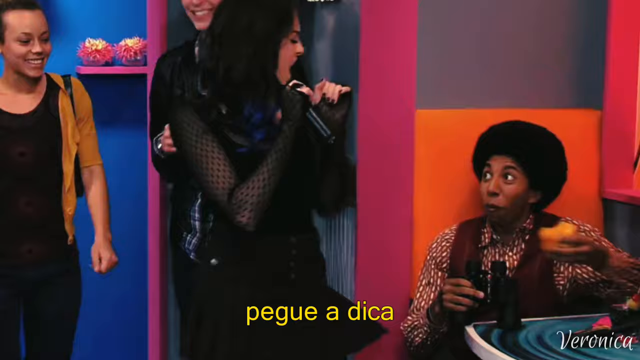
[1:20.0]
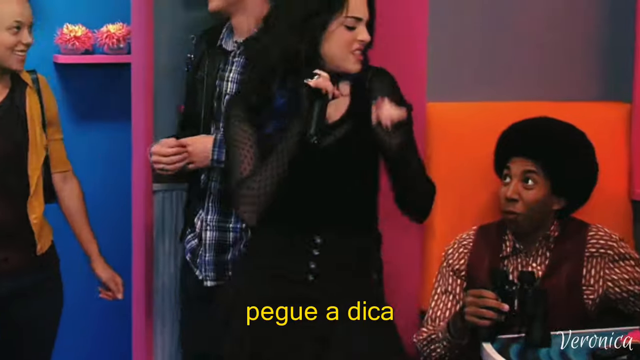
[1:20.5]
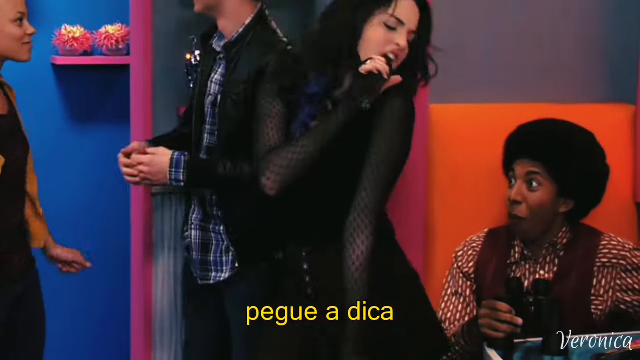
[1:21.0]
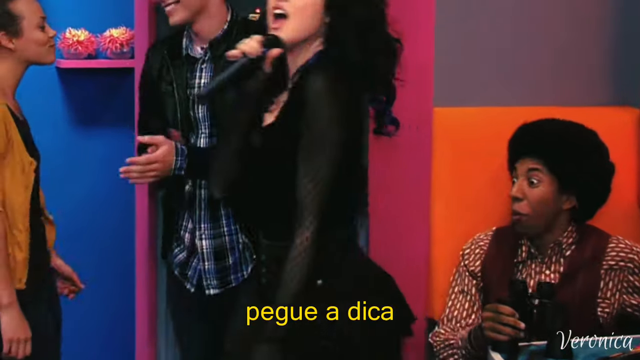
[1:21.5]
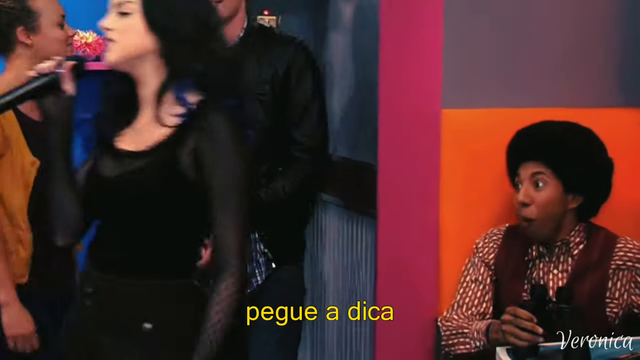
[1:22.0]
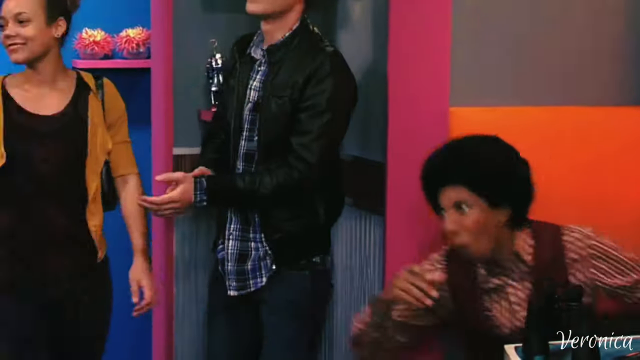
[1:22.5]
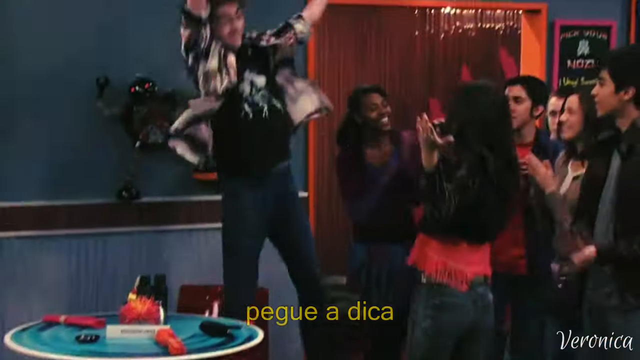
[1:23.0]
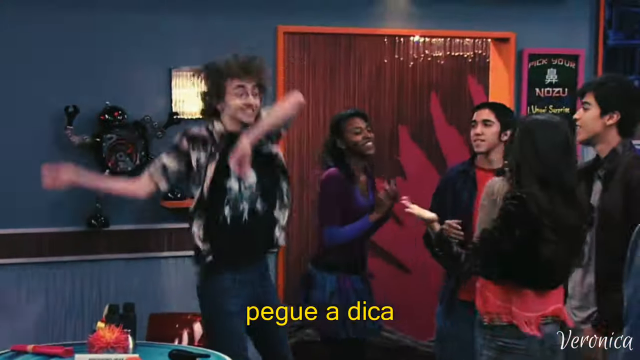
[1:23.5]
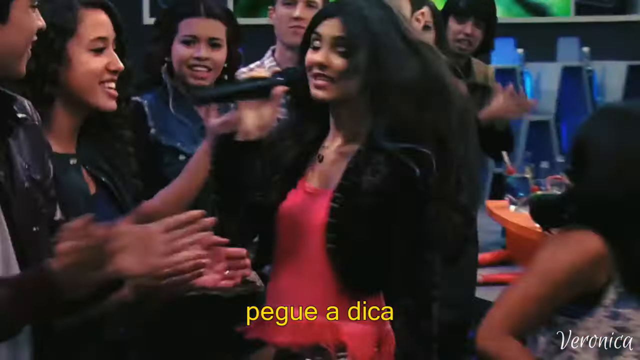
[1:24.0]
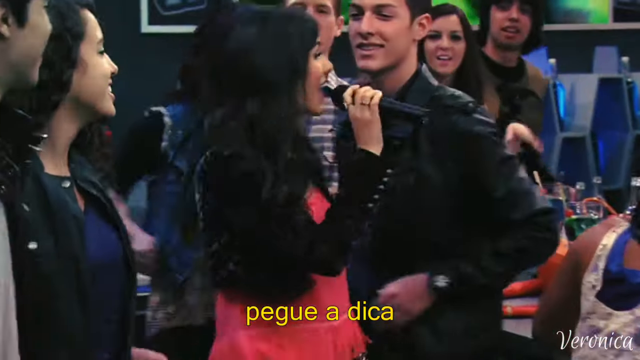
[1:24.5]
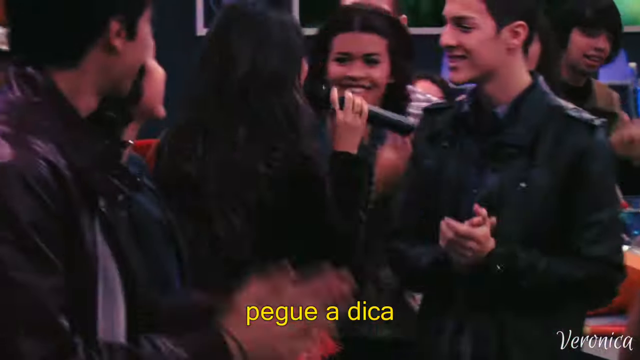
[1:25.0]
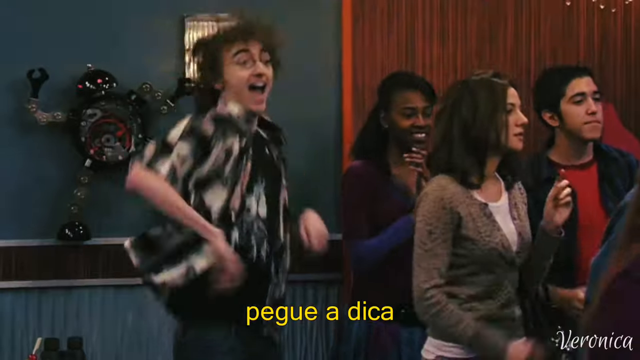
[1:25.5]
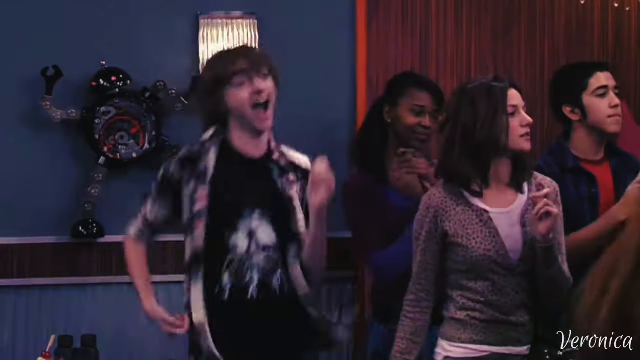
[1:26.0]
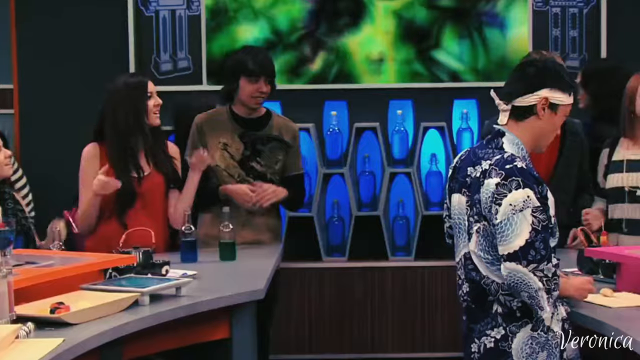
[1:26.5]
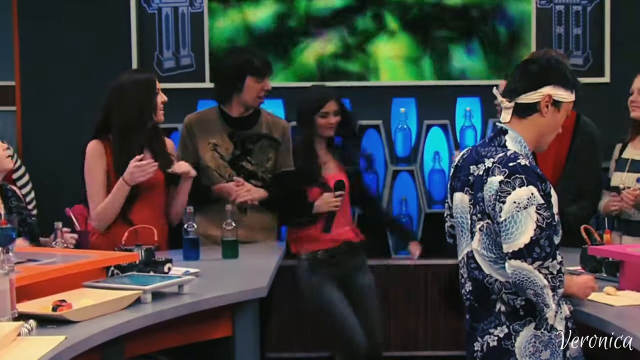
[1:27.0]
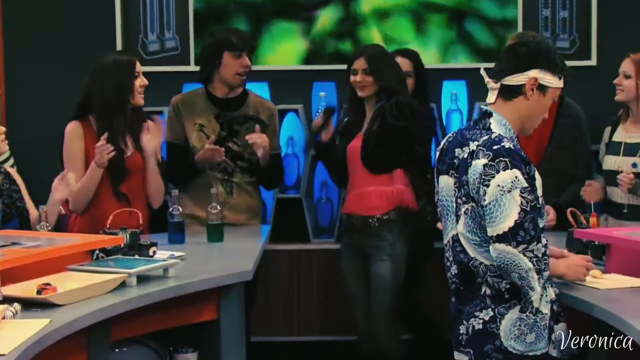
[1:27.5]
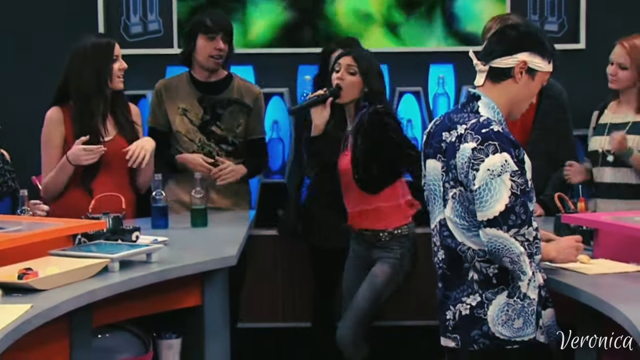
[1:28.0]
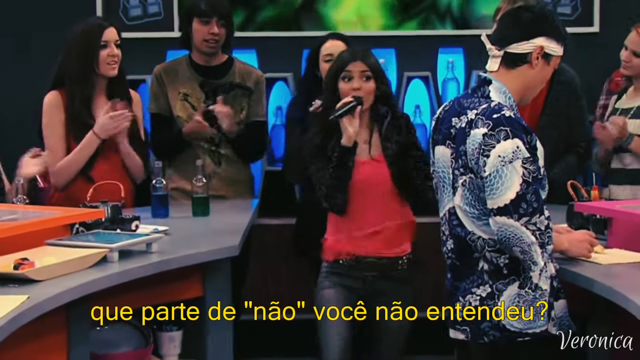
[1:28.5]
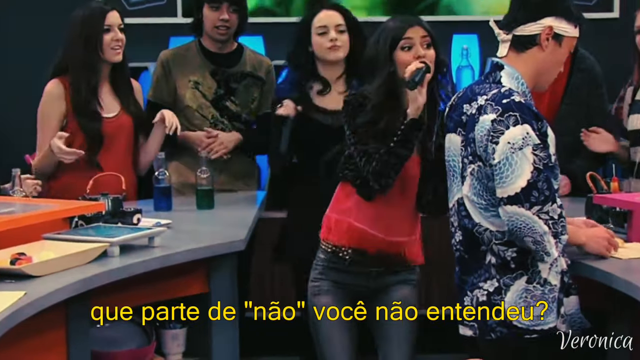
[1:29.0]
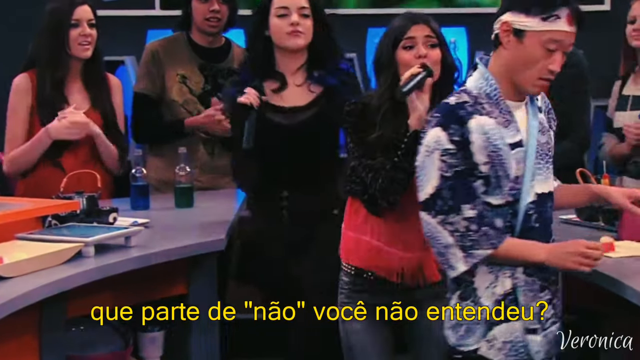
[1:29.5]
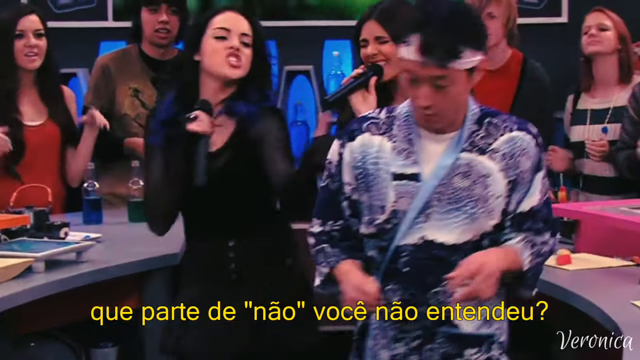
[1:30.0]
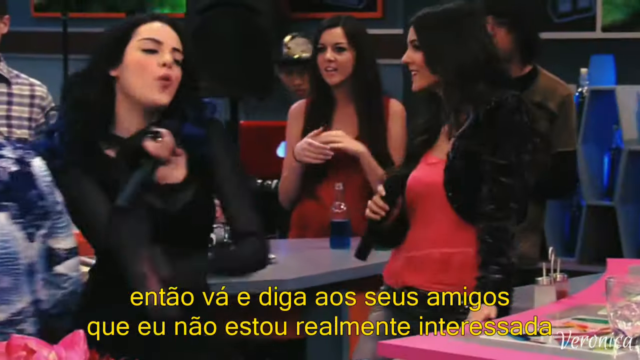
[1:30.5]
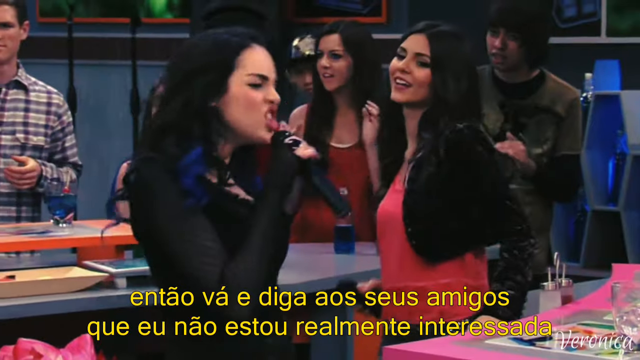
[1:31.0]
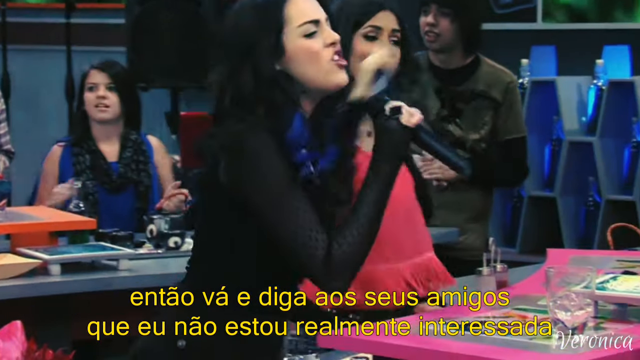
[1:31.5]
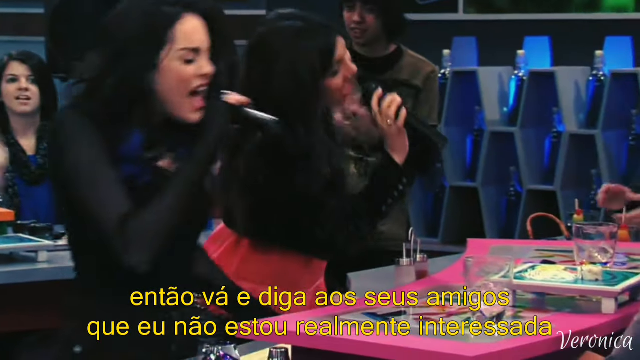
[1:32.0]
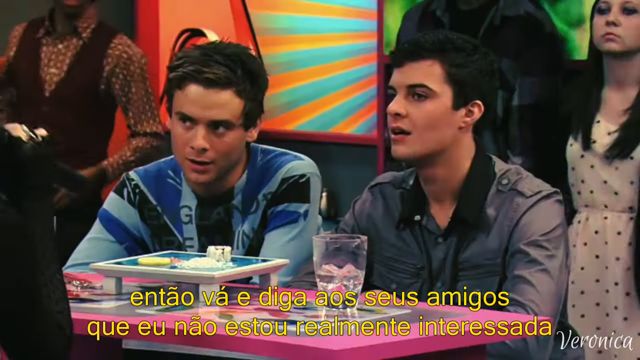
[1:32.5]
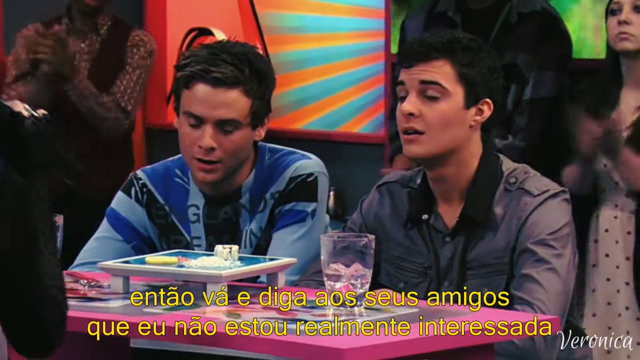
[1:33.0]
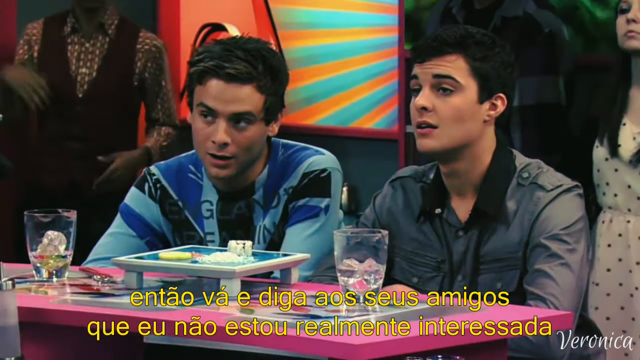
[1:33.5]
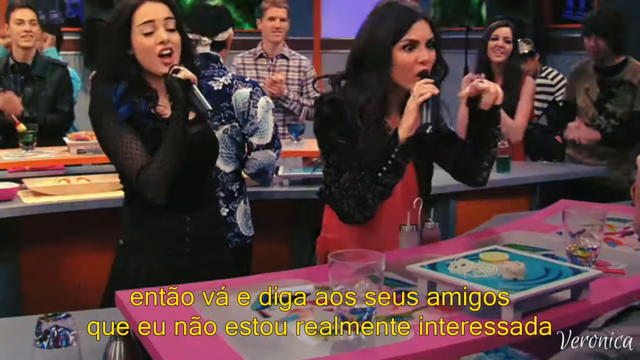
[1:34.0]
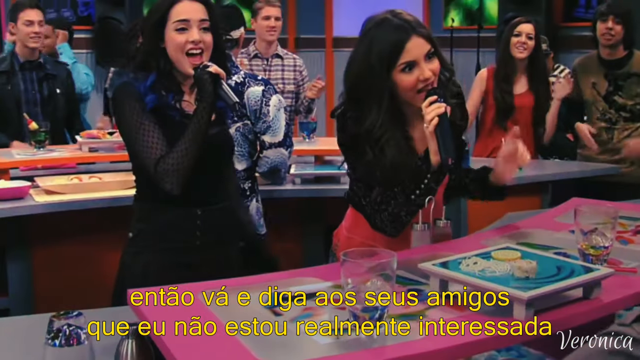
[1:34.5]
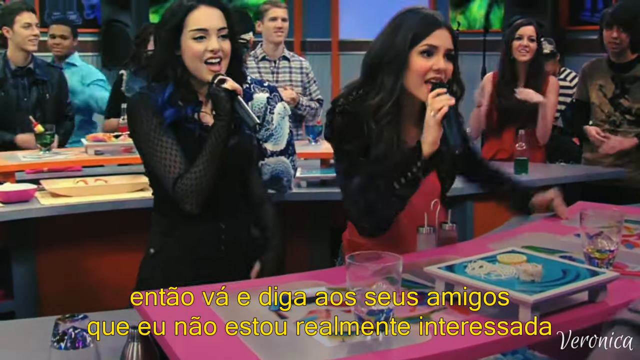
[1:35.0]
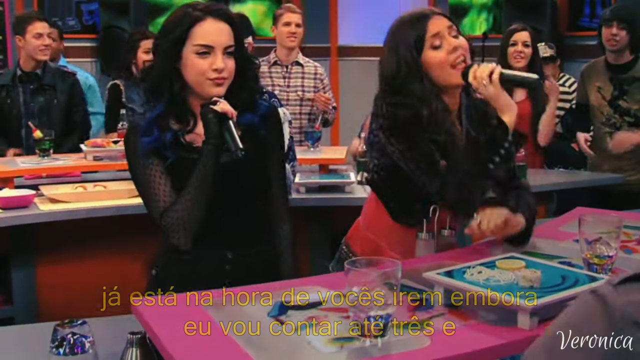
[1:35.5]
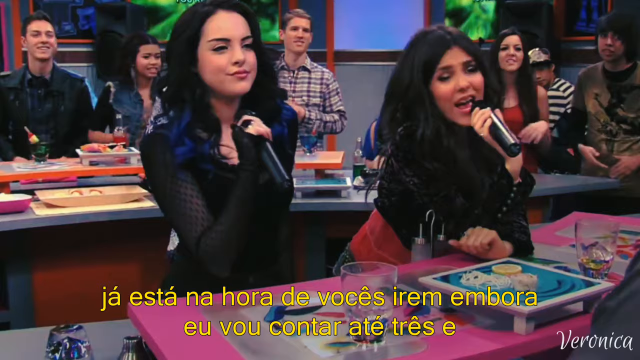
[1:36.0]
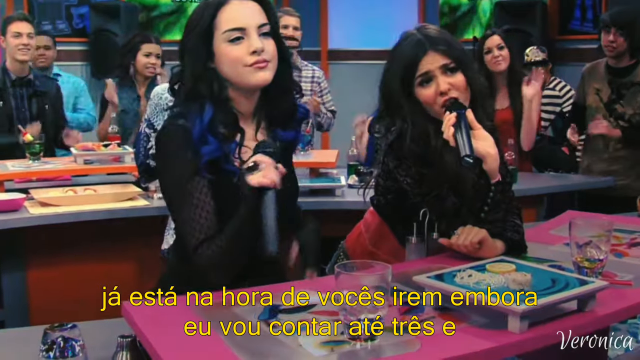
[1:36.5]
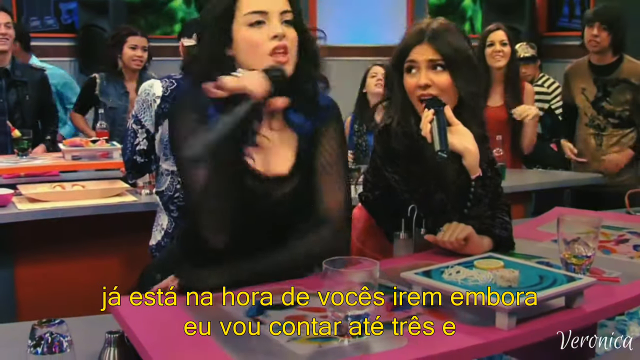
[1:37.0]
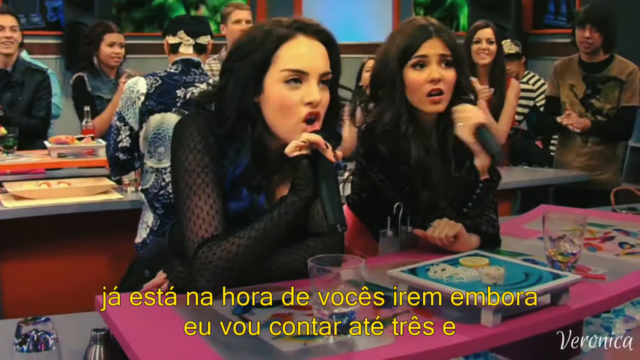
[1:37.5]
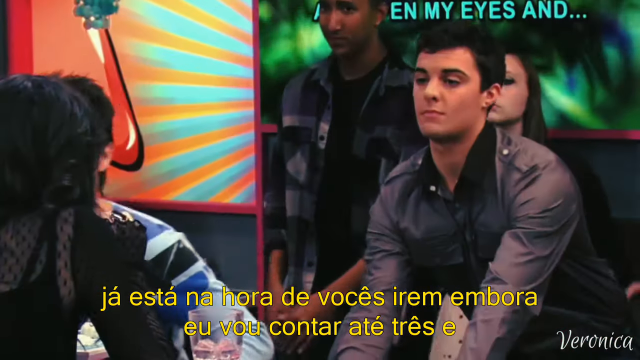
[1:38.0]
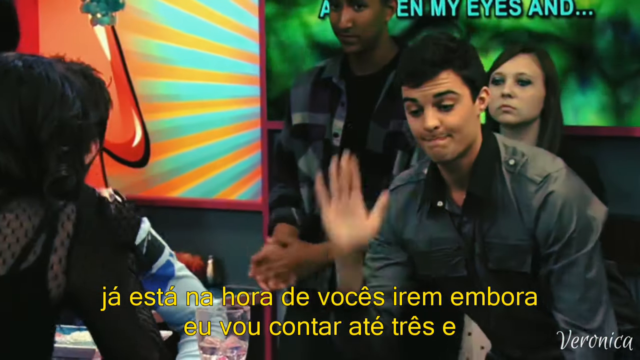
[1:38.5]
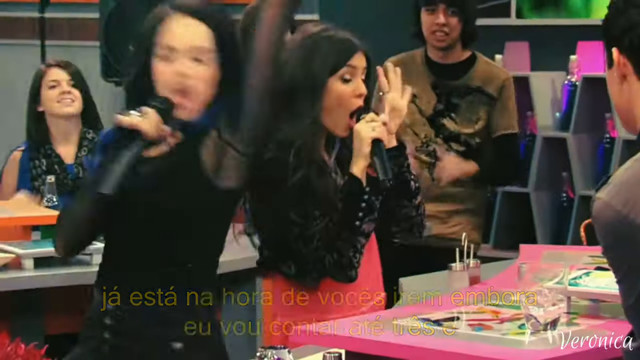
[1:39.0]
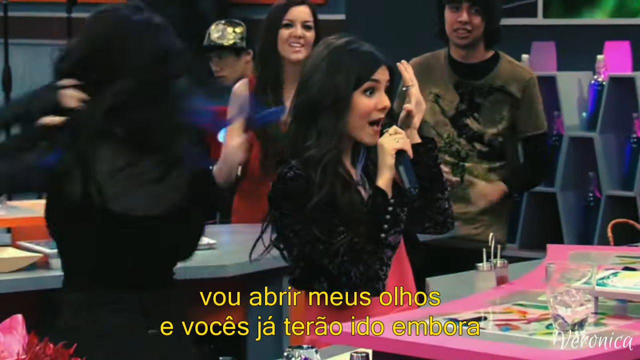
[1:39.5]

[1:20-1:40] The woman in the black top sings toward the black man with the afro as he finishes eating; he looks surprised. She looks toward him, does a little shimmy, shakes her hips, and quickly departs as he gets up. The camera pans to the woman in the red and black top dancing with the nerdy guy with the larger hair, glasses, open button-up shirt and t-shirt. He quickly springs up toward her, and they all move toward the center of the group as the two dance. The two karaoke singers head to the center of the place, which appears to be a Japanese sushi restaurant: on the right-hand side a Japanese worker in a blue, kind of dragon-patterned shirt and a white headband rolls sushi. The women walk toward the center singing and harass the sushi maker, who leaves. The shot then goes to the original two guys, the one in the blue British shirt and the one in the dark shirt, who appear to be looking at the women defiantly and do not look overly pleased. The two women sit smugly, bent over the counter while singing at them, and then both put their hands up to say goodbye.